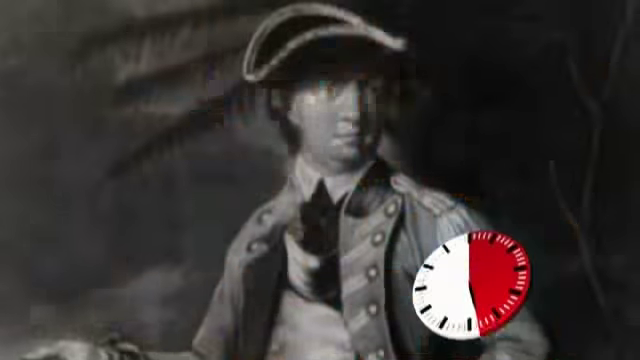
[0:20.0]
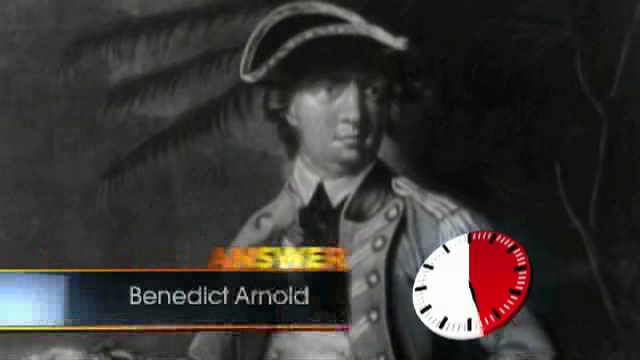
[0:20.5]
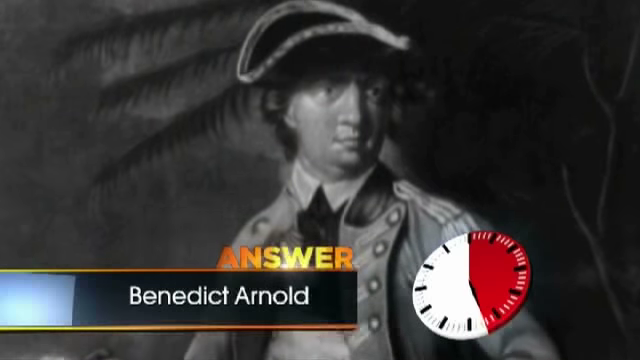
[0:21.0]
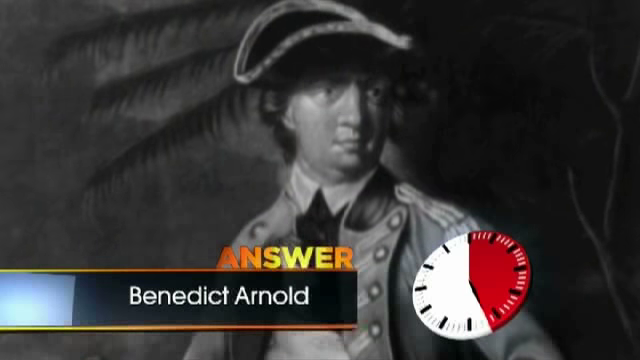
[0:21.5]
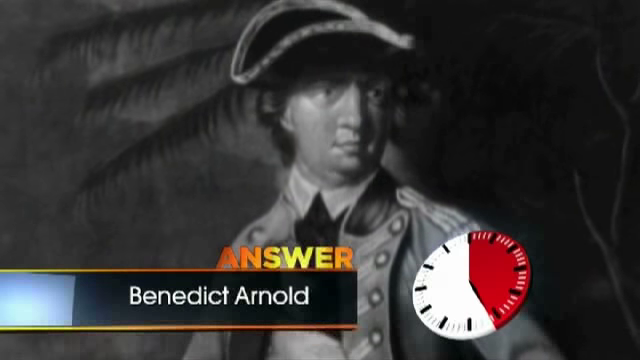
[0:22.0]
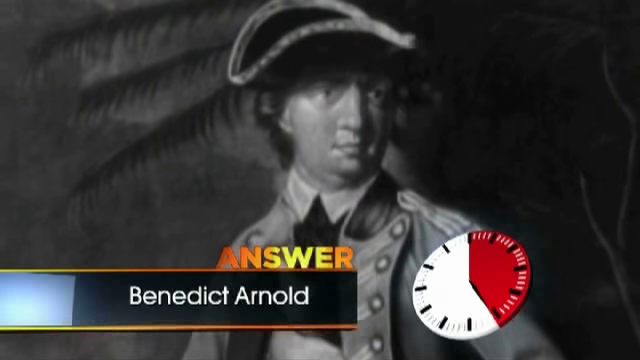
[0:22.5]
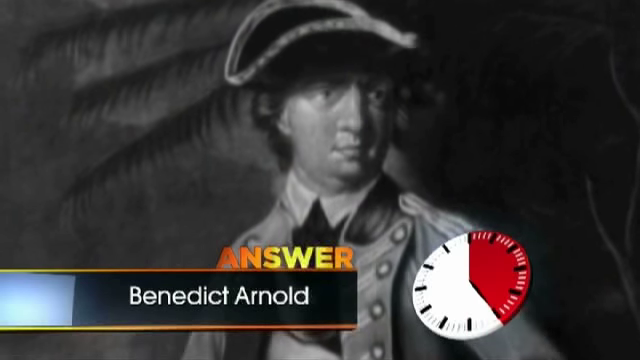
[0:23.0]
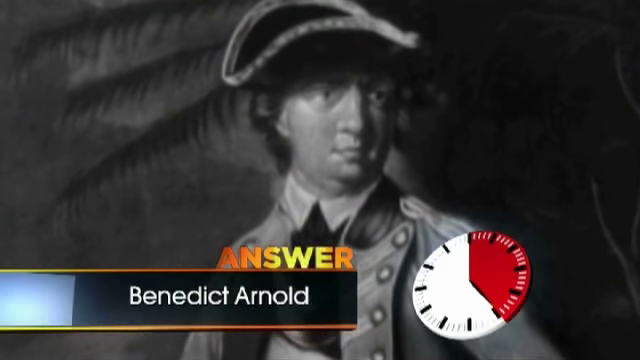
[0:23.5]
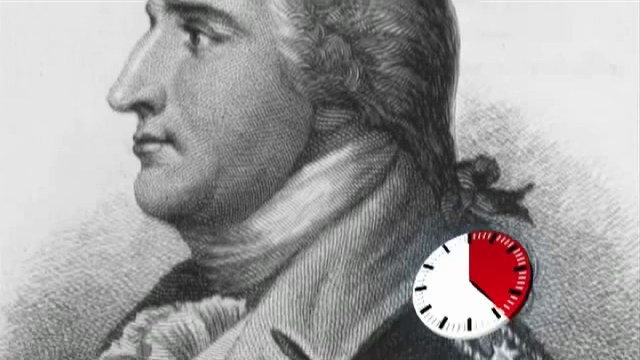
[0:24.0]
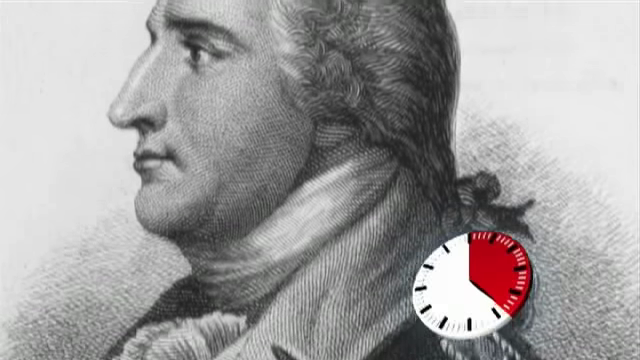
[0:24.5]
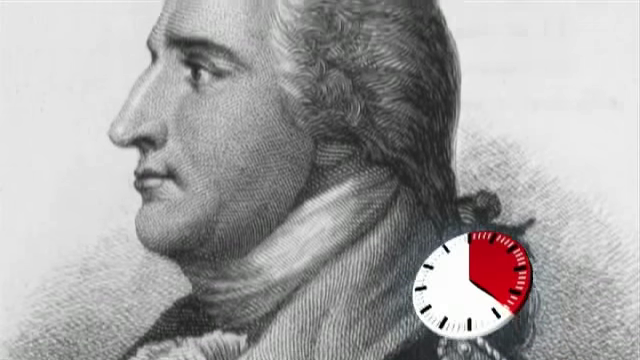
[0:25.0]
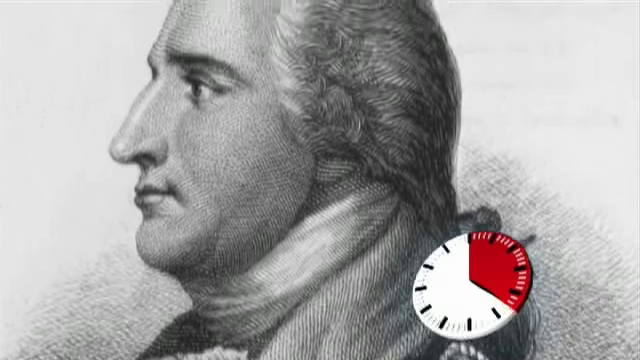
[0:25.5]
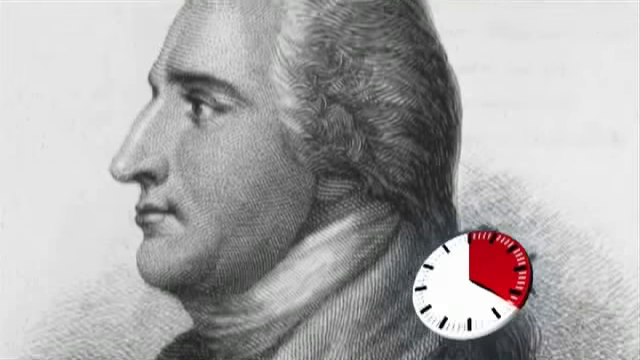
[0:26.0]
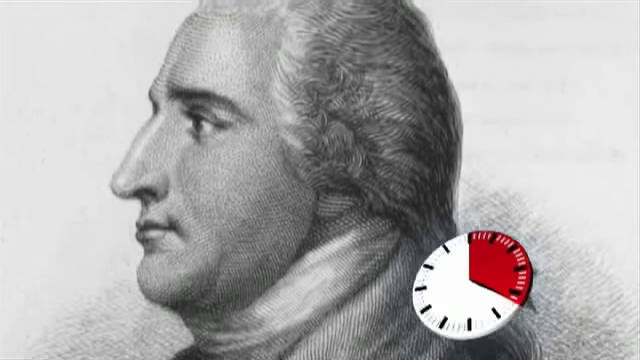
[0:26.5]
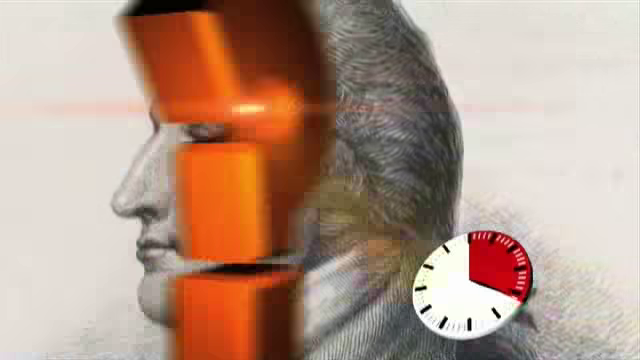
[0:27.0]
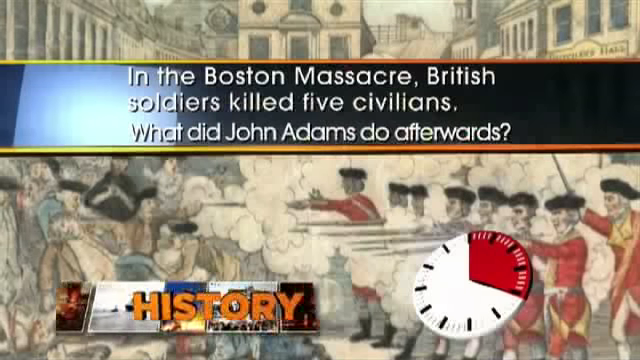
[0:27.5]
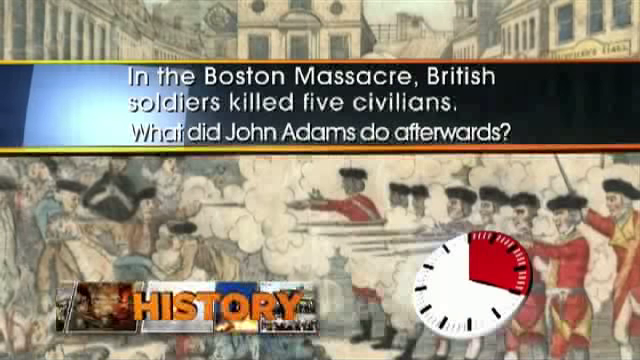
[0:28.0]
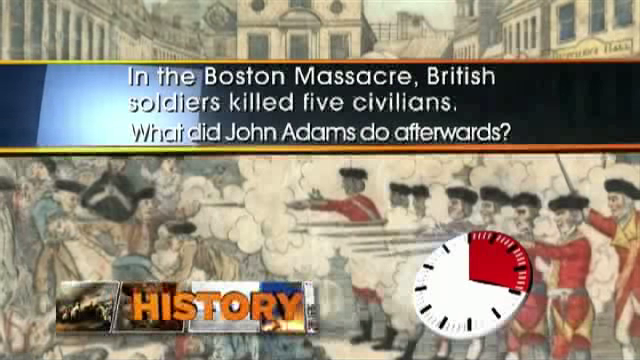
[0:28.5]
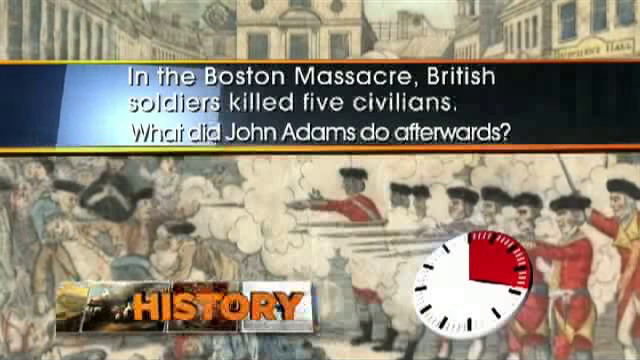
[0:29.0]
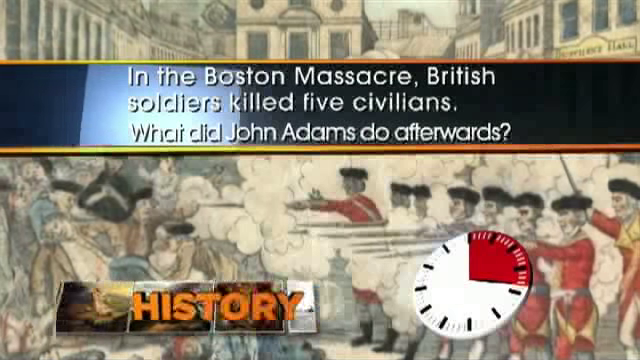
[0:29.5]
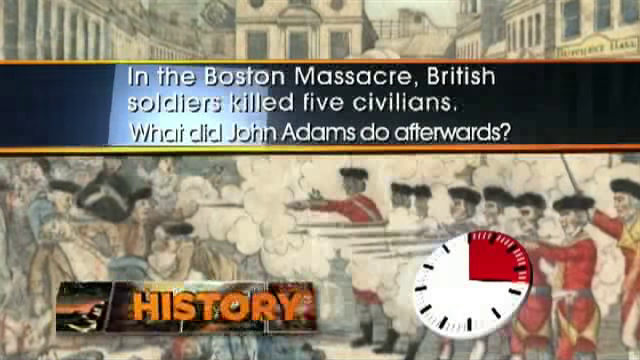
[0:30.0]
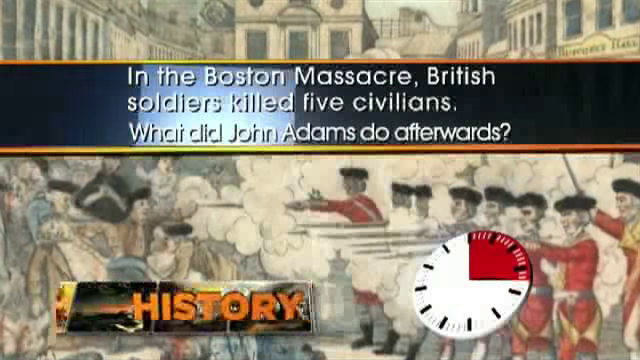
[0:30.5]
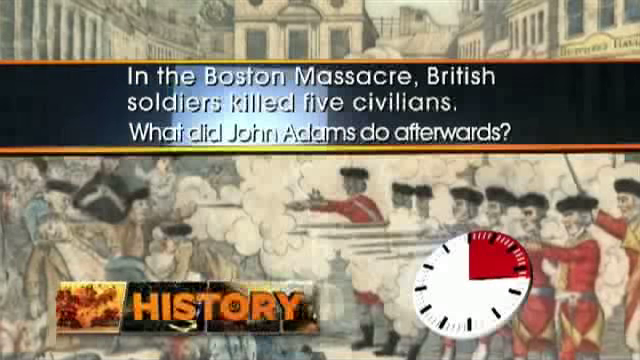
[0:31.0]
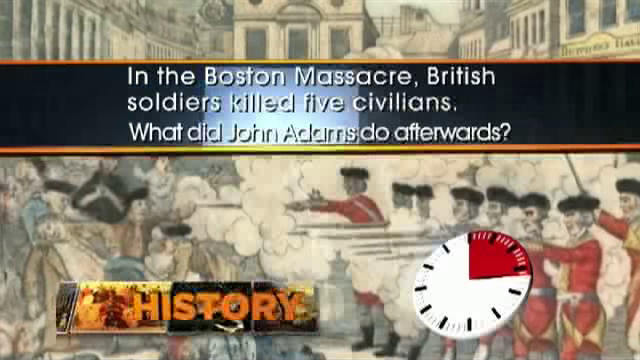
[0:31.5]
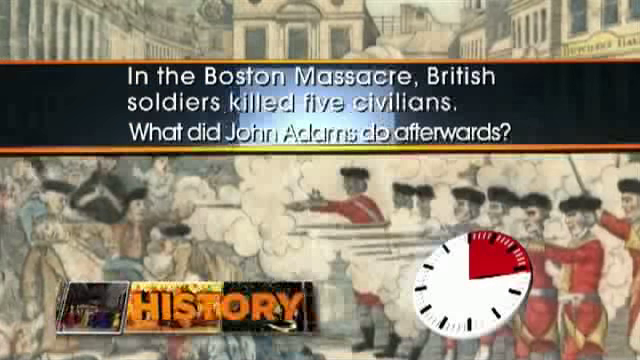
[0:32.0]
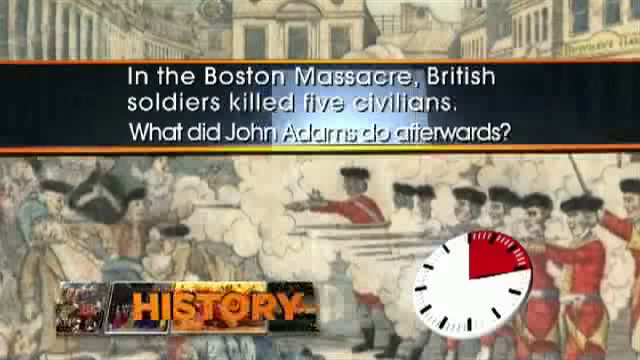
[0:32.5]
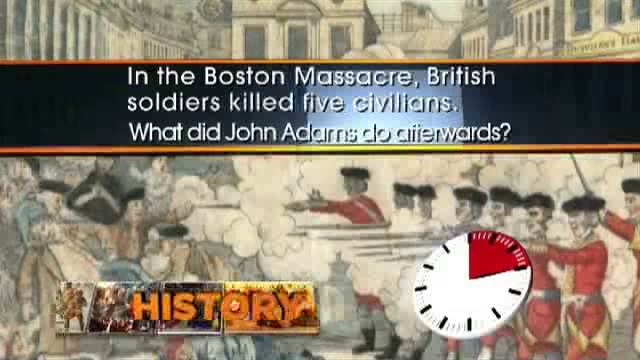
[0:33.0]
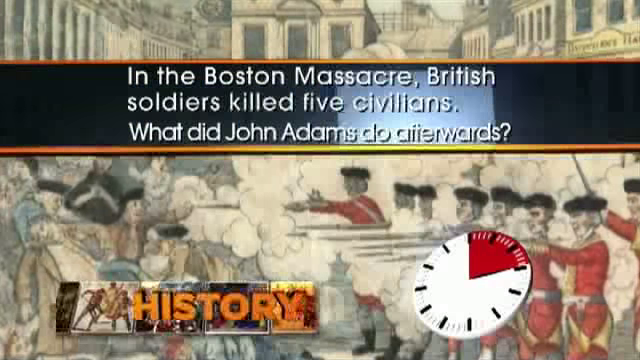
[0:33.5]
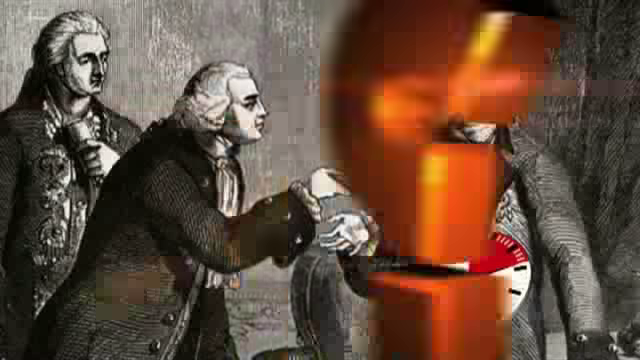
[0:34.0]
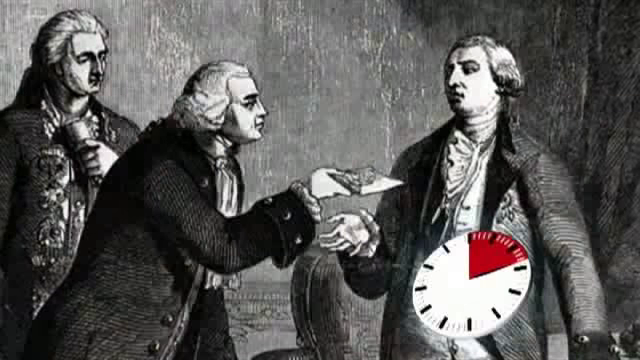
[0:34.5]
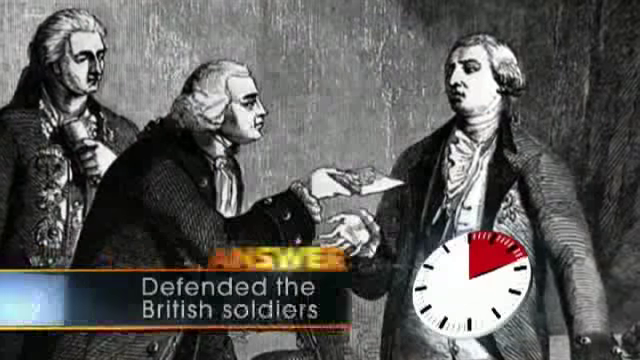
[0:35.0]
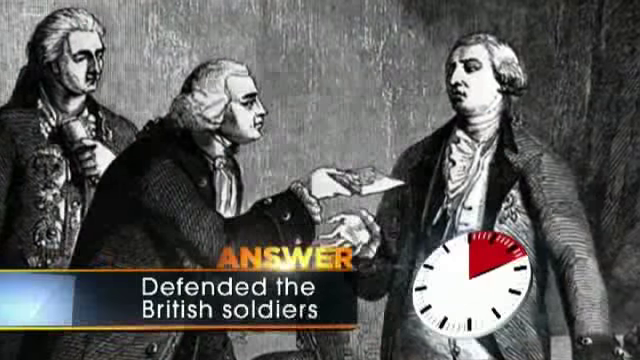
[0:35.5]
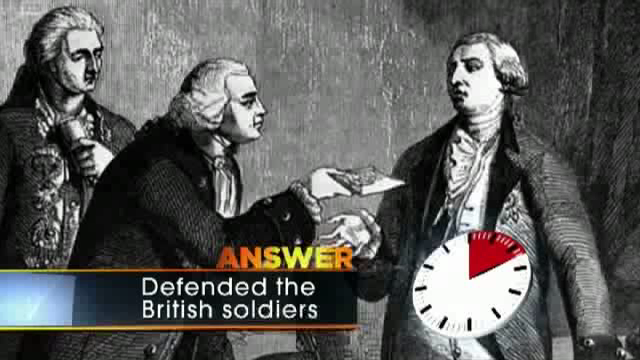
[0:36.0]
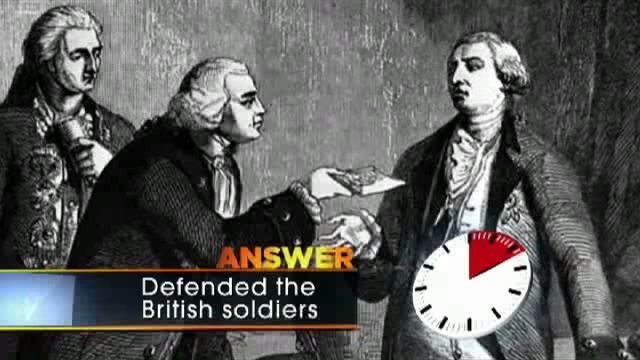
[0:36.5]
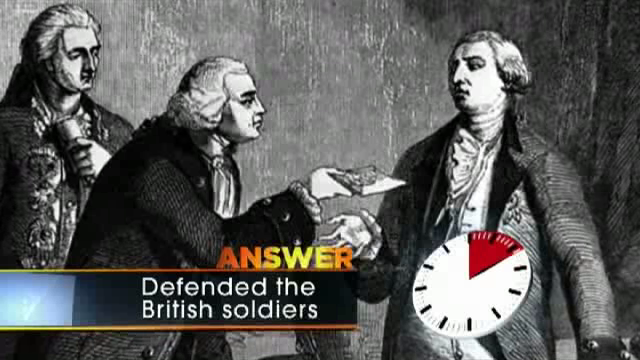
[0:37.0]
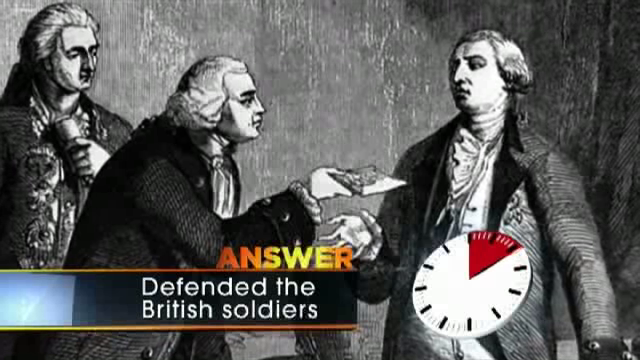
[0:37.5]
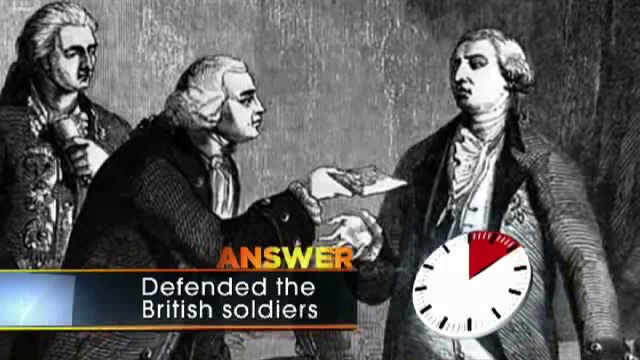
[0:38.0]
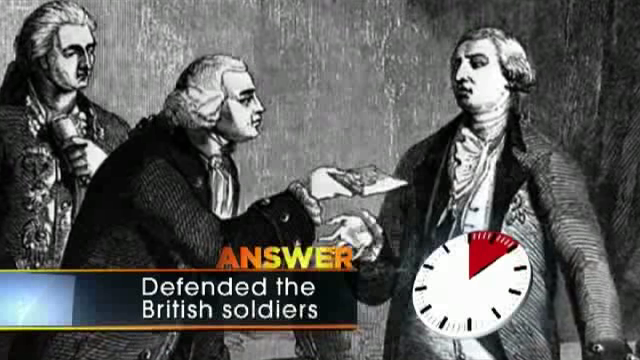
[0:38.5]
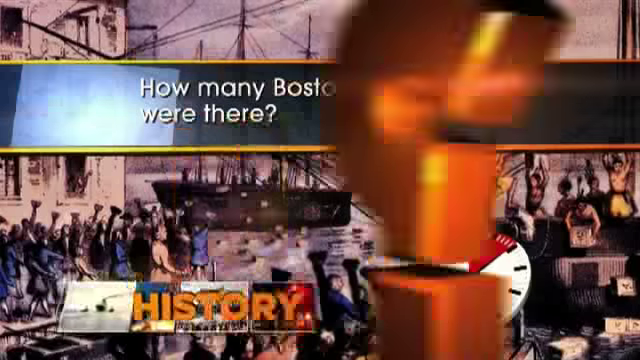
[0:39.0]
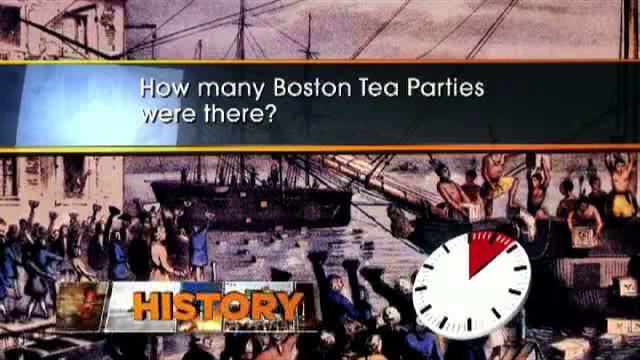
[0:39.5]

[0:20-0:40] The video, a little wider than it is tall, starts with a black-and-white image of a man shown from the chest up in the center. His body faces roughly the 6:30 direction and his head is turned to maybe about 5:30. He wears a black triangular hat with a light-colored rim, and what looks like a palm tree is in the distance behind him. Next comes what looks like a pencil sketch of another man from that era, the 1700s to 1800s, showing just his head facing left with puffy white hair. Then a new image appears with a banner across the top in white text reading "in the Boston Massacre, British soldiers killed five civilians. What did John Adams do afterwards?" The picture looks like an artist's work and shows redcoats shooting a bunch of people on the left-hand side, probably about eight redcoats and maybe about 15 people on the left, with really high, multi-storied buildings in the background.